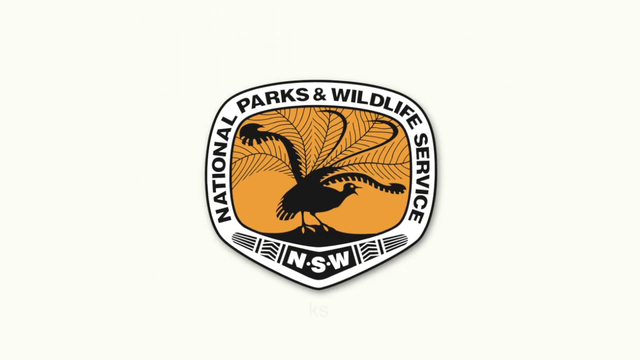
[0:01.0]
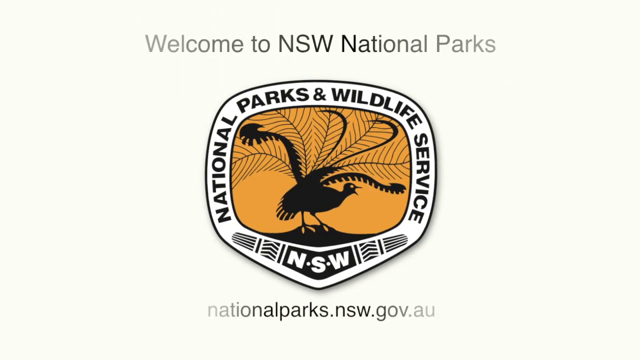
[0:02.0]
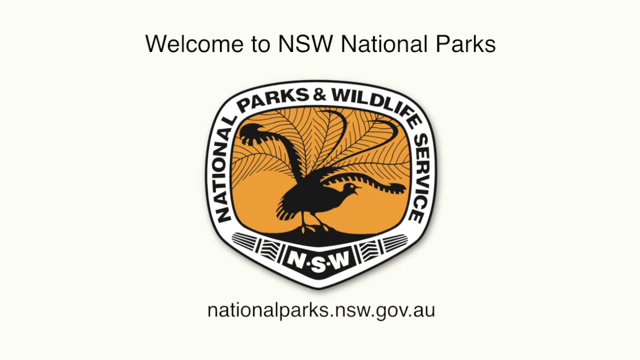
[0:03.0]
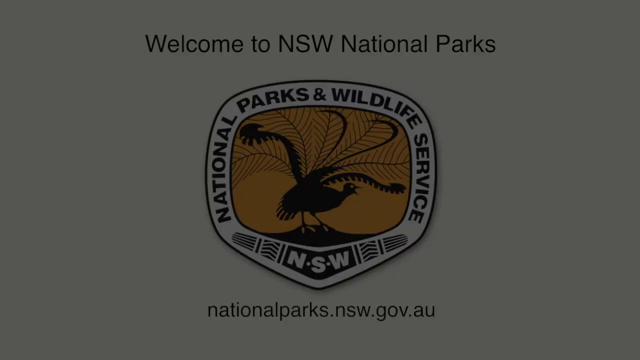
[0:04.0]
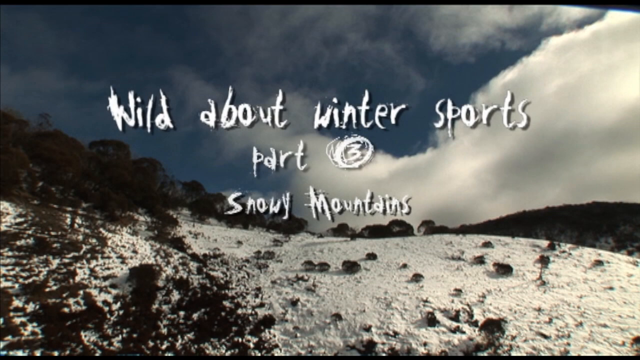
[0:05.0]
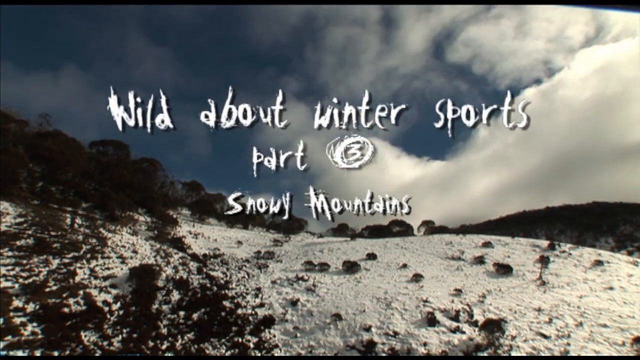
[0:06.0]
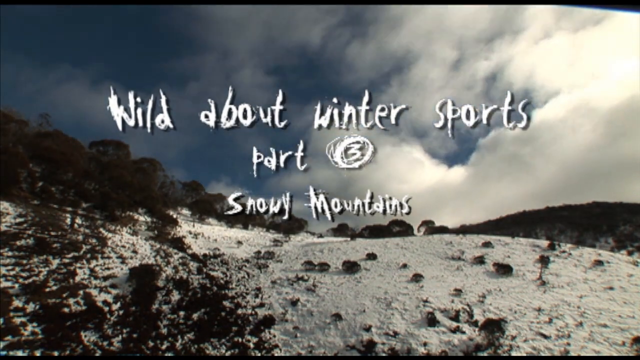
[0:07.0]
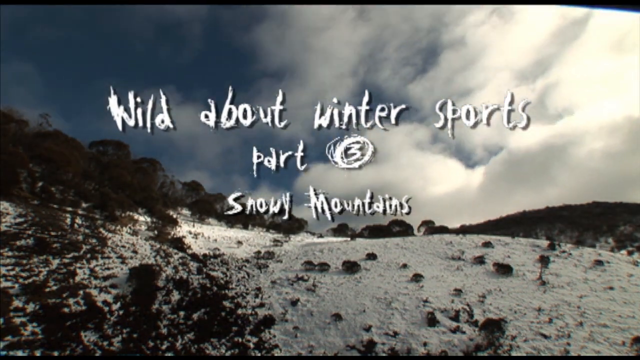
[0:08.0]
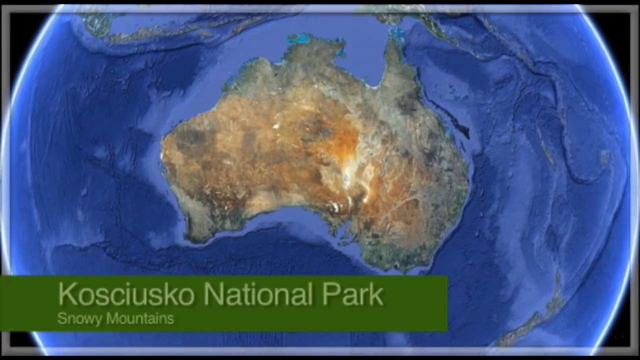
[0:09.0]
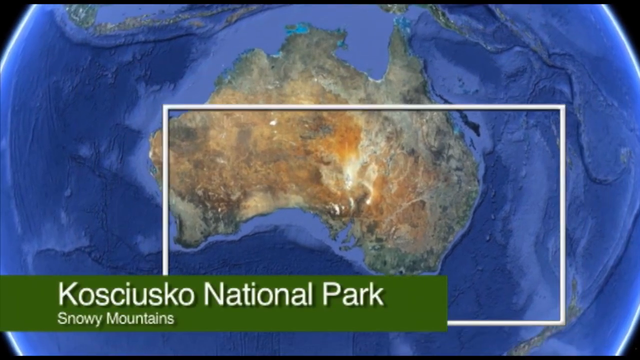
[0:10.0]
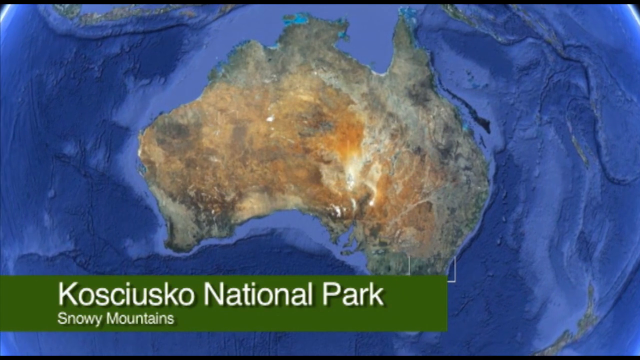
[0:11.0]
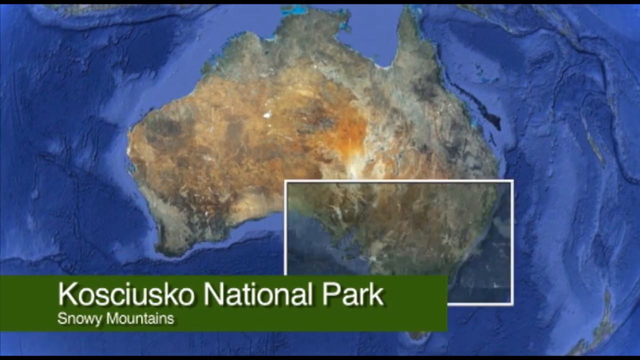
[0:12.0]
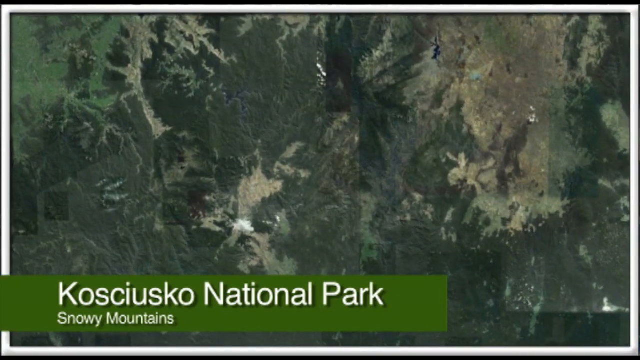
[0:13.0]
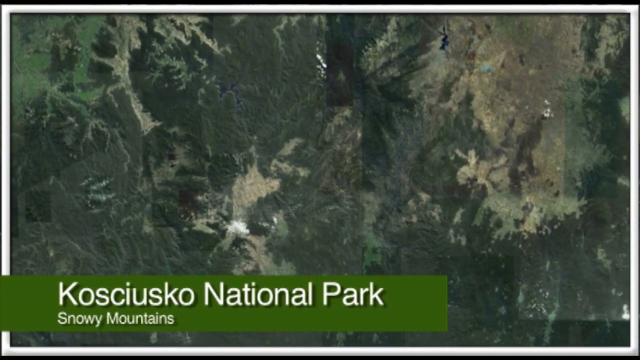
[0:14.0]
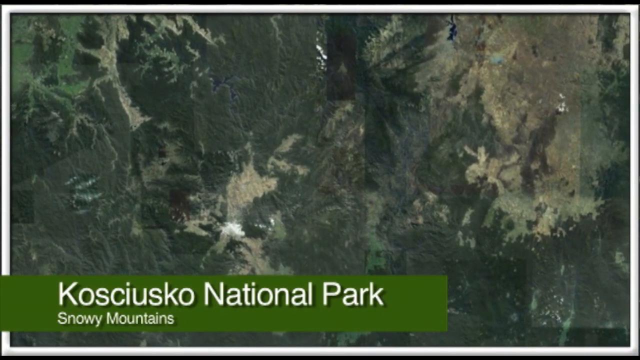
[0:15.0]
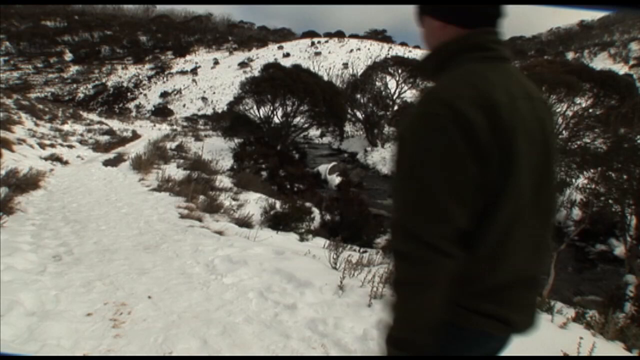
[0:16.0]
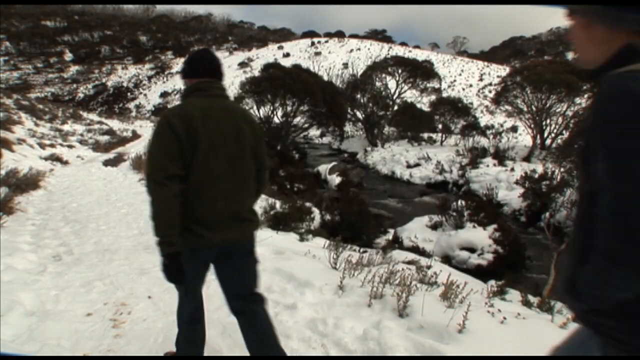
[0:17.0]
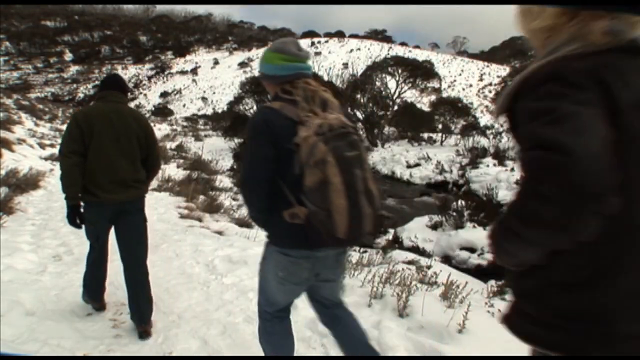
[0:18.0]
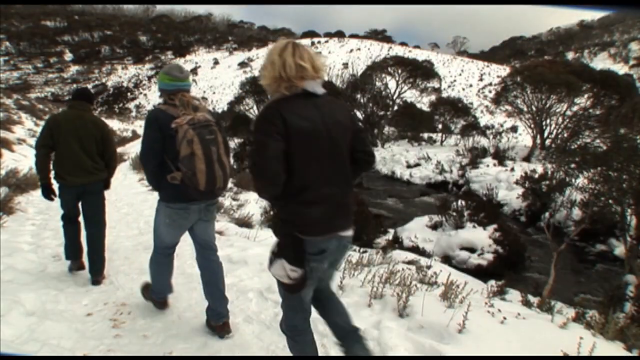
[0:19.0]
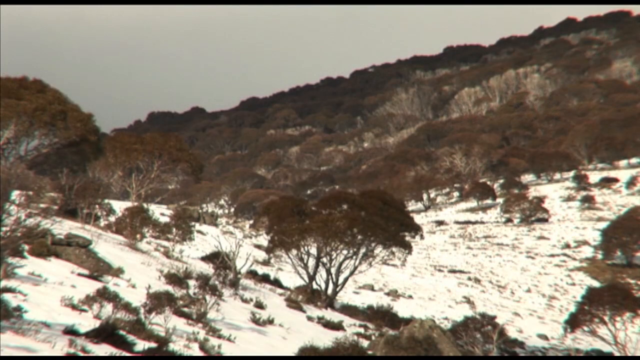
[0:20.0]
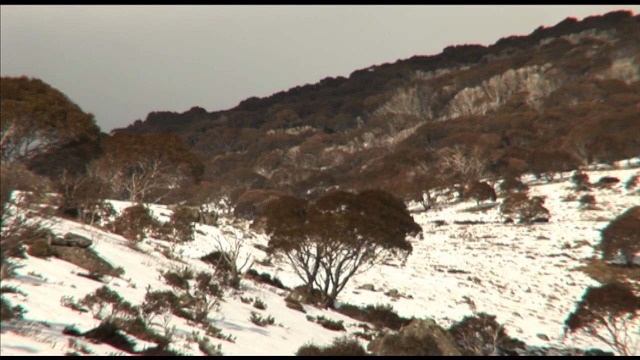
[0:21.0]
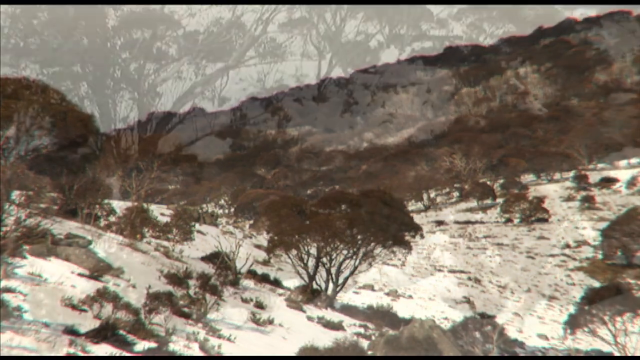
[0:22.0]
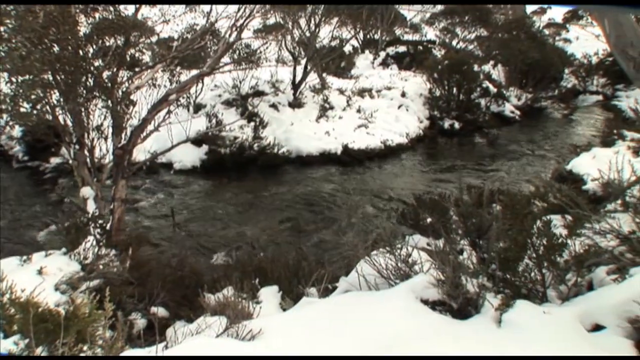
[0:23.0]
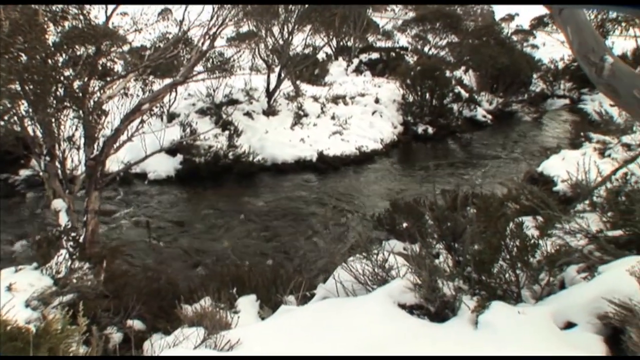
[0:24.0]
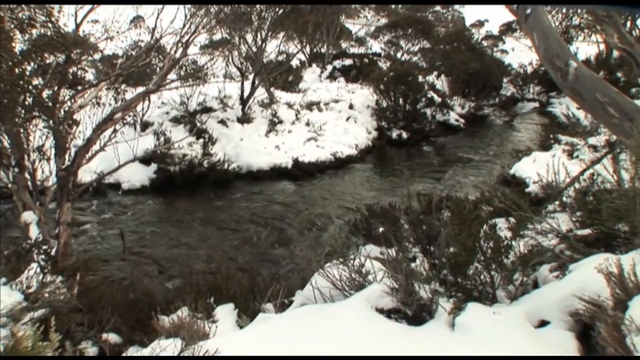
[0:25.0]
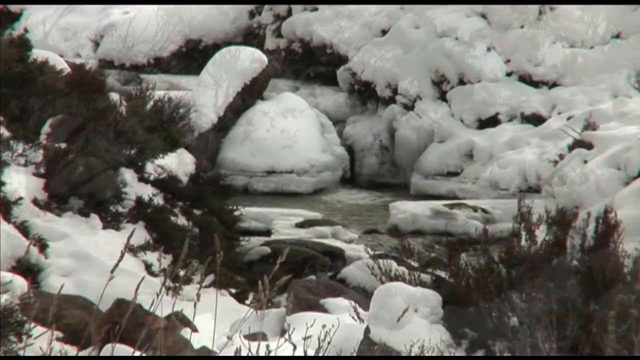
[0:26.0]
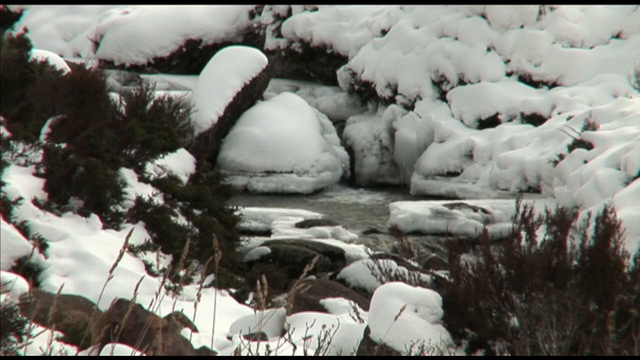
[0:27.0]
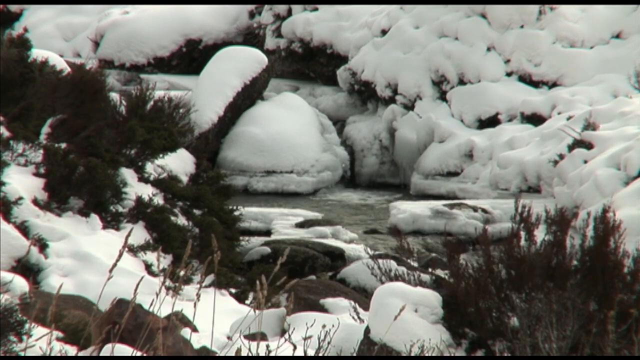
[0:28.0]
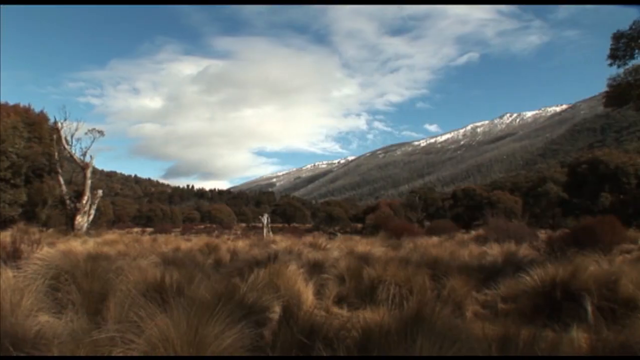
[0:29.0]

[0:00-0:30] A logo appears on the screen with "National Parks and Wildlife Service" in black capital letters around the top. In the centre is a strange kind of bird in black silhouette, with looped feathers a bit like a peacock's and its beak open. At the bottom of the logo is what is almost like a boomerang shape with aboriginal-style patterns and "NSW", and at the bottom of the screen, in black text, are "National Parks" and "nationalparks.nsw.gov.au". The logo disappears and a mountainy winter scene appears with the title "Wild about winter sports part 3", the 3 inside a scribbly circle, and "snowy mountains" beneath it, all in kind of casual, rough, scruffy white writing. A sort of curved mountain has small trees dotted across it, and clouds move quickly over the back. Next comes Earth from space: an island is shown, and the view moves into one square, with a green box at the bottom reading "Kosciuszko National Park, snowy mountains"; it is like a geographical aerial shot. Three hikers then come from the right-hand side of the screen over to the left-hand side, followed by various snowy mountain scenes with a stream running through the centre through snowy rocks.